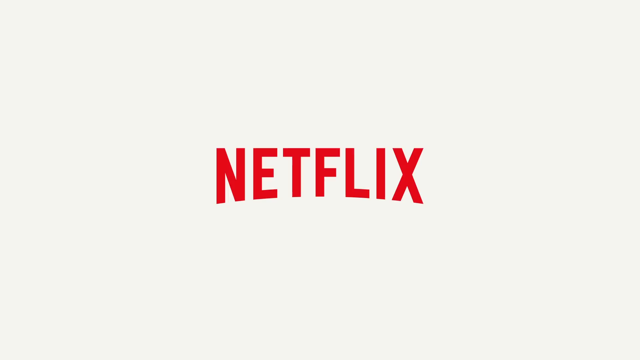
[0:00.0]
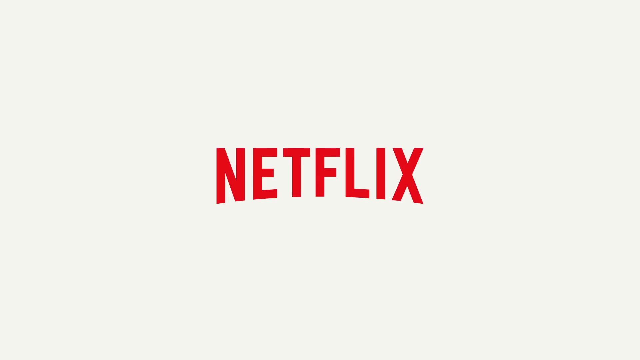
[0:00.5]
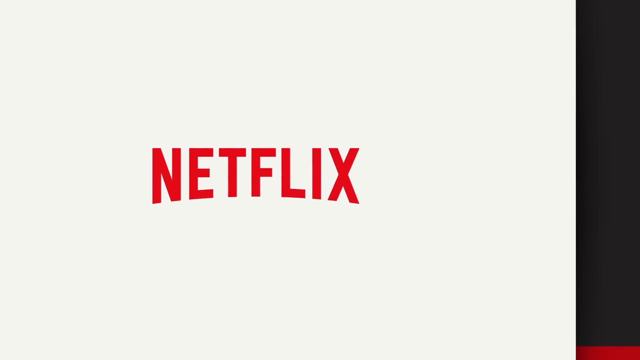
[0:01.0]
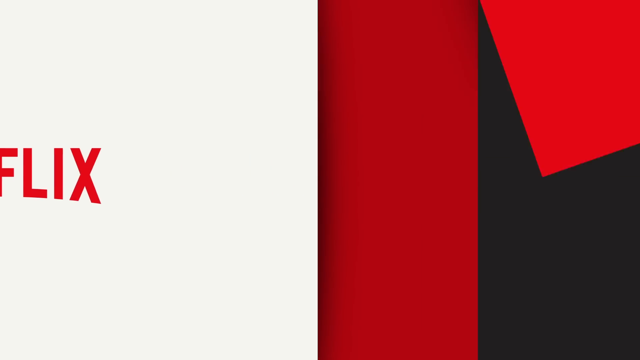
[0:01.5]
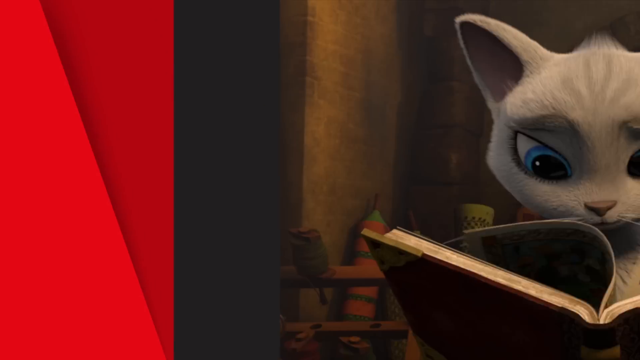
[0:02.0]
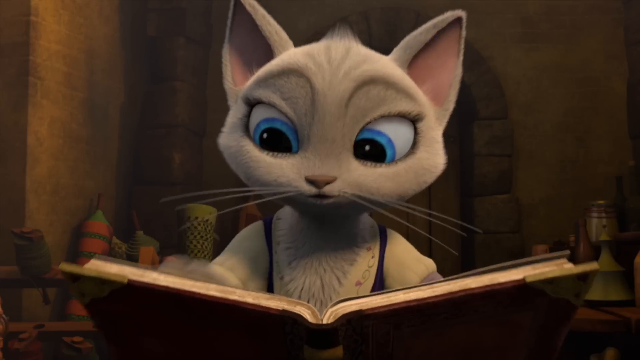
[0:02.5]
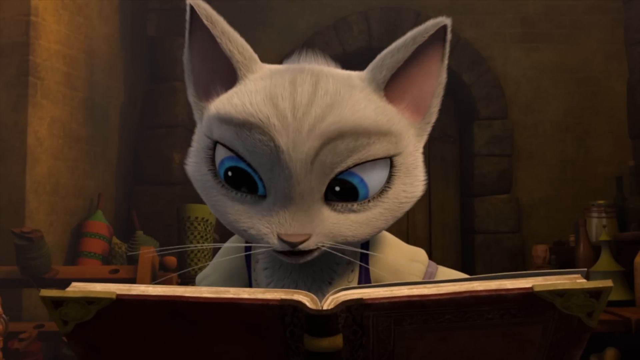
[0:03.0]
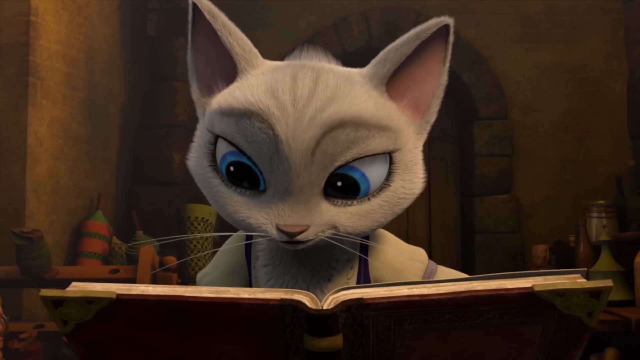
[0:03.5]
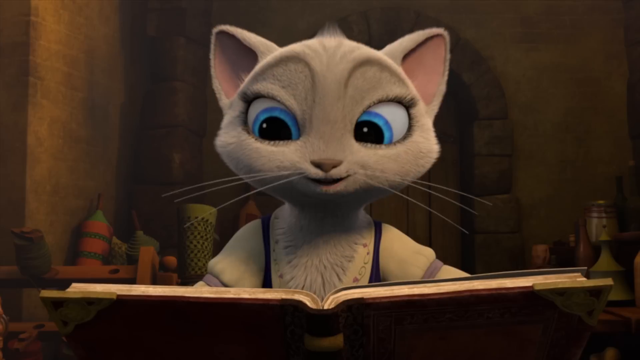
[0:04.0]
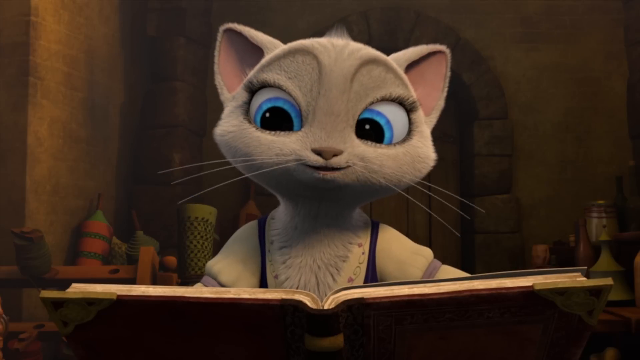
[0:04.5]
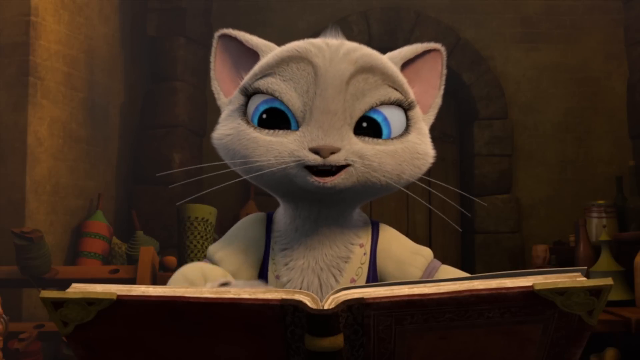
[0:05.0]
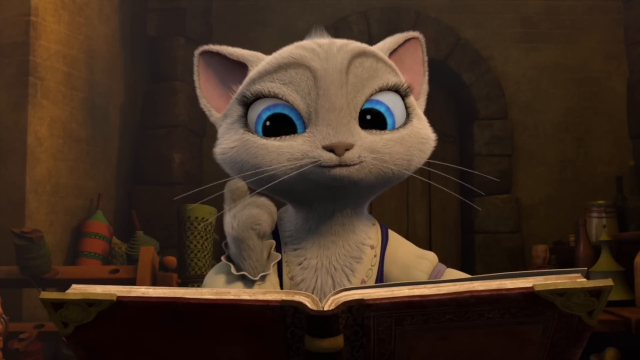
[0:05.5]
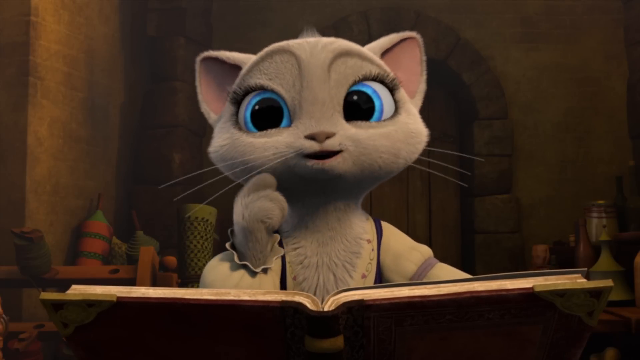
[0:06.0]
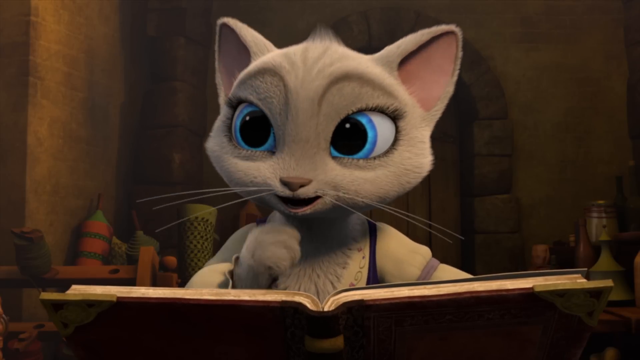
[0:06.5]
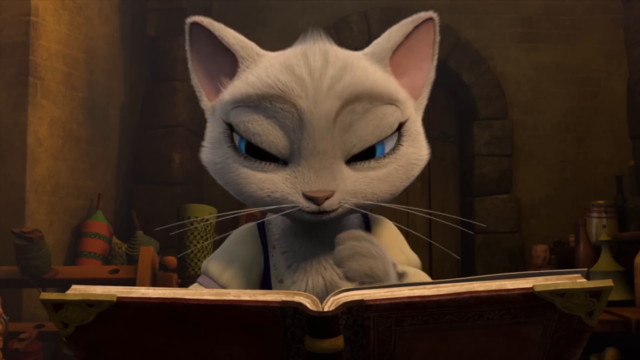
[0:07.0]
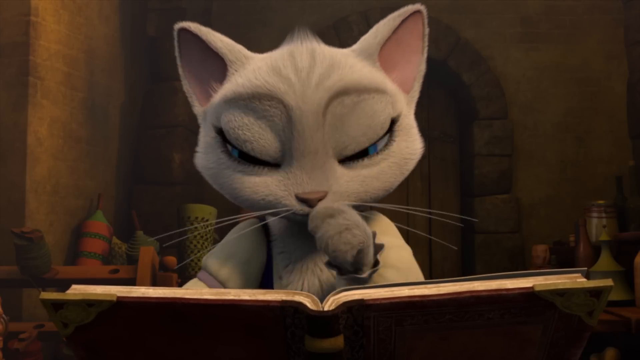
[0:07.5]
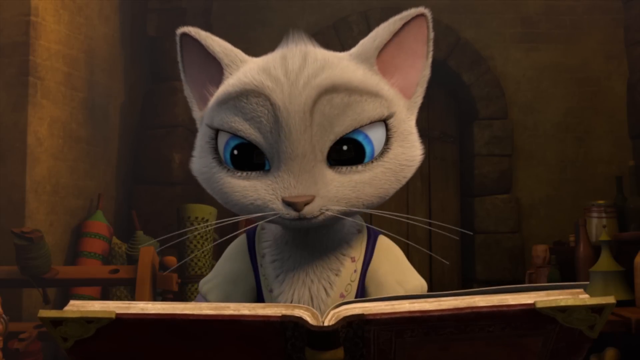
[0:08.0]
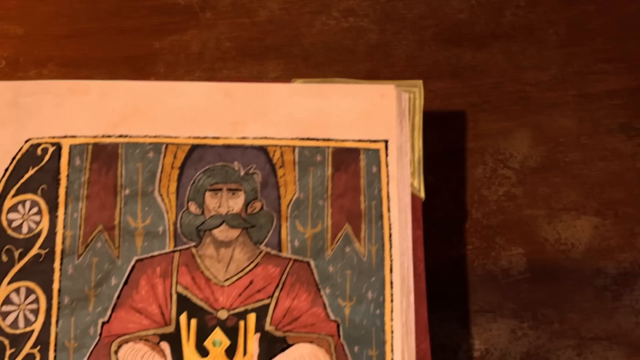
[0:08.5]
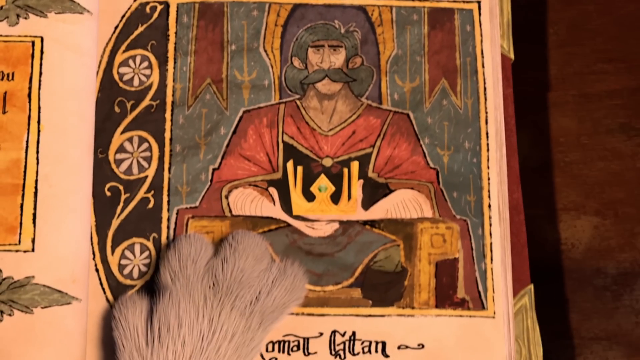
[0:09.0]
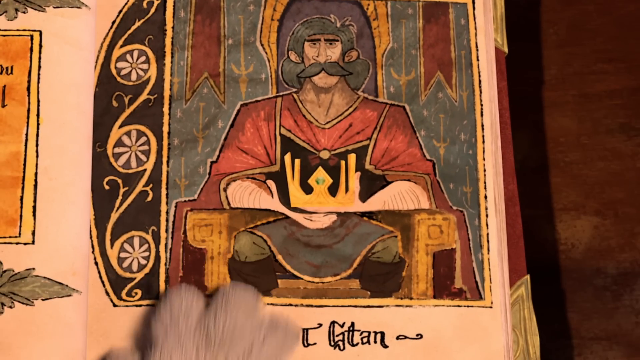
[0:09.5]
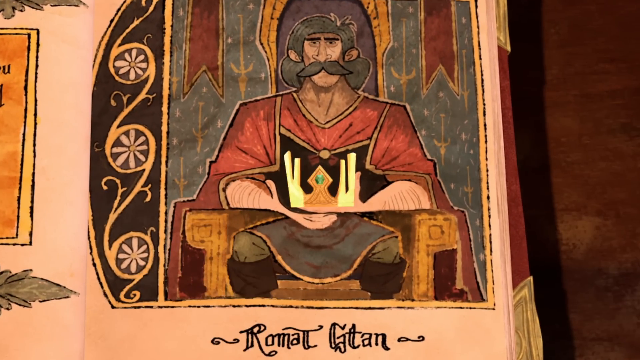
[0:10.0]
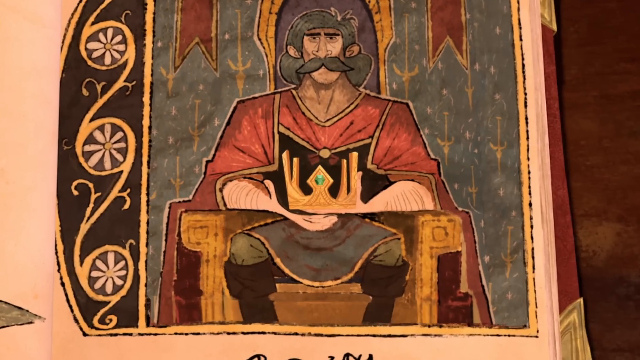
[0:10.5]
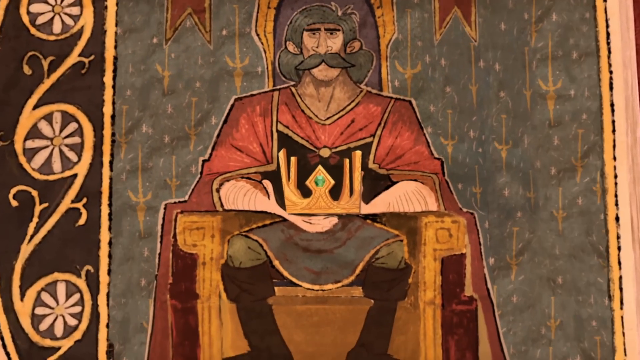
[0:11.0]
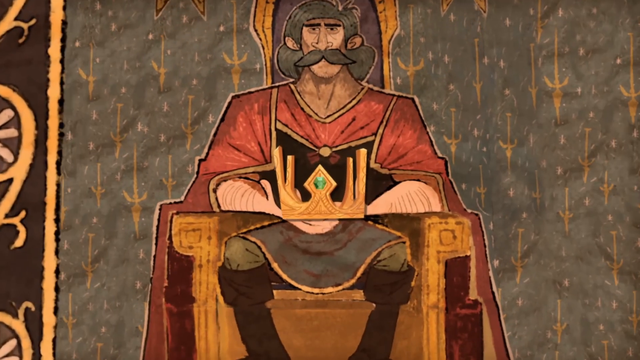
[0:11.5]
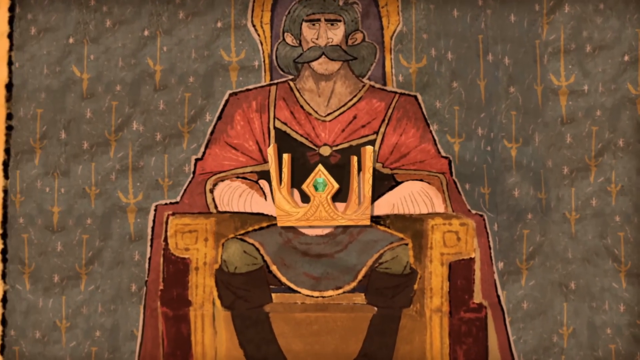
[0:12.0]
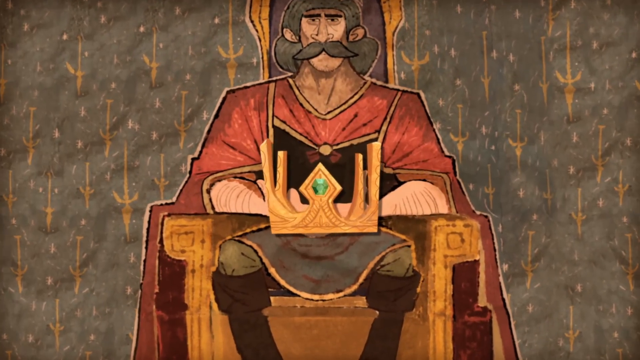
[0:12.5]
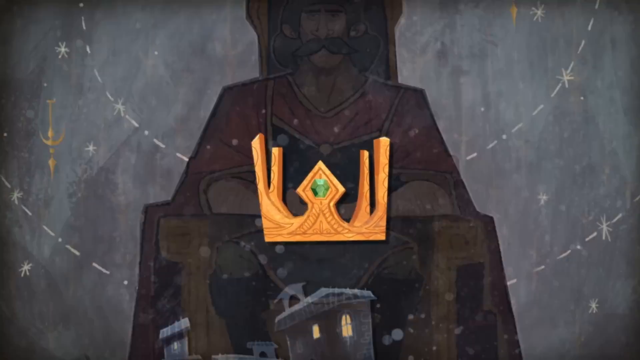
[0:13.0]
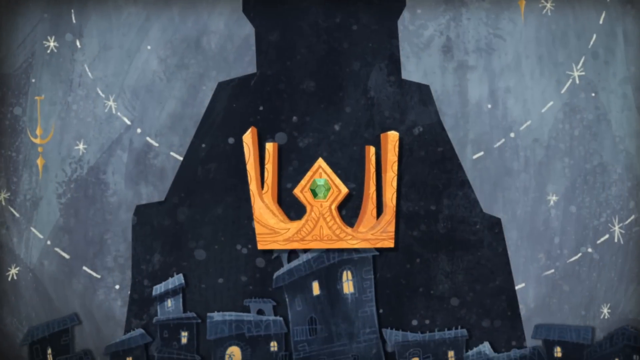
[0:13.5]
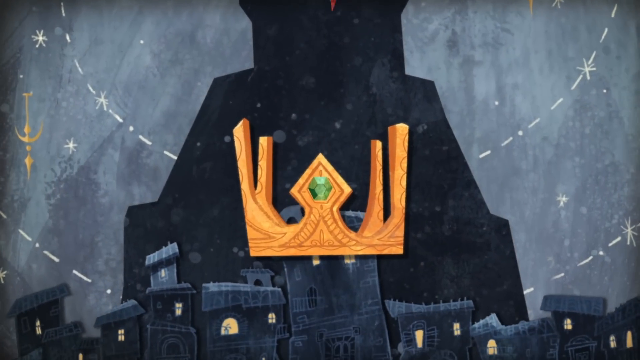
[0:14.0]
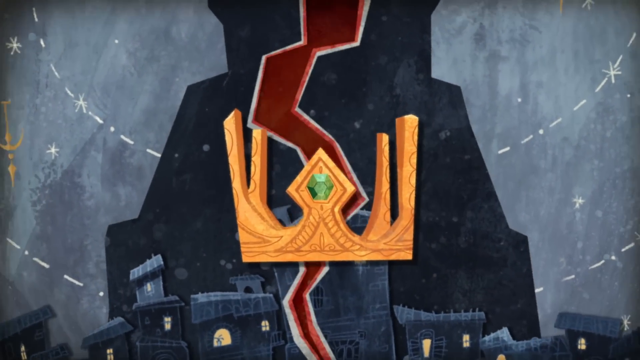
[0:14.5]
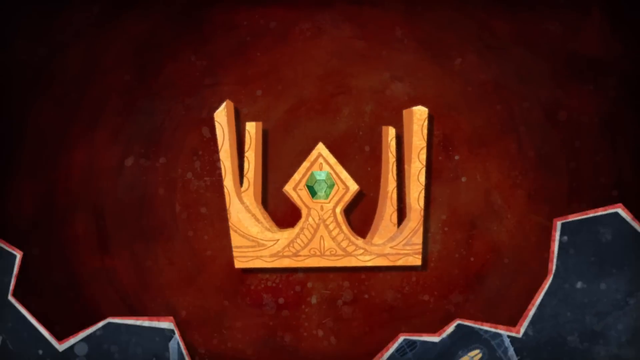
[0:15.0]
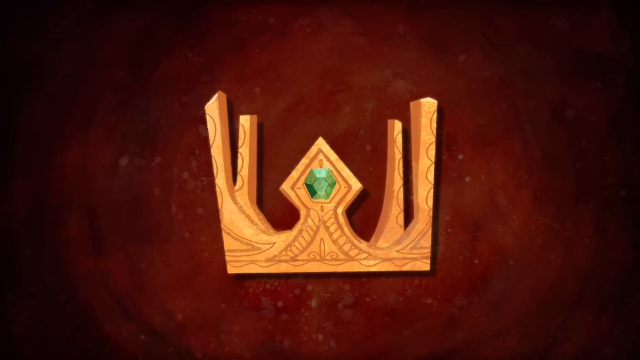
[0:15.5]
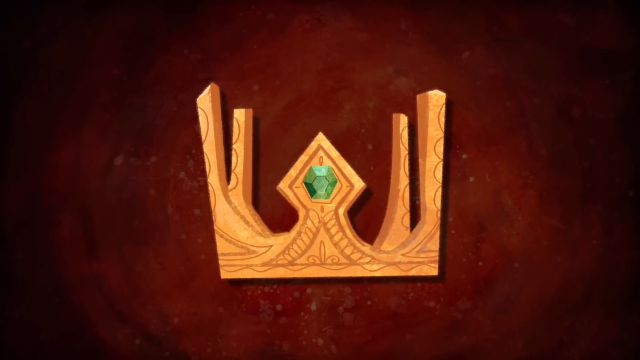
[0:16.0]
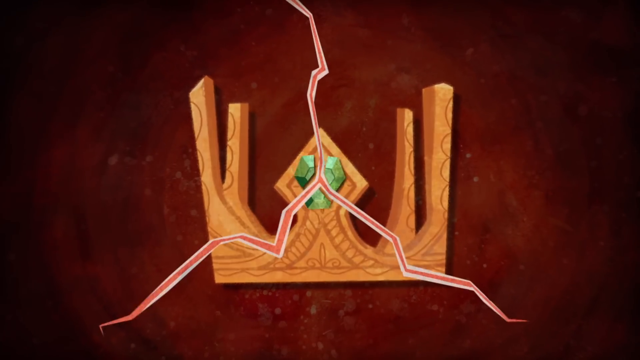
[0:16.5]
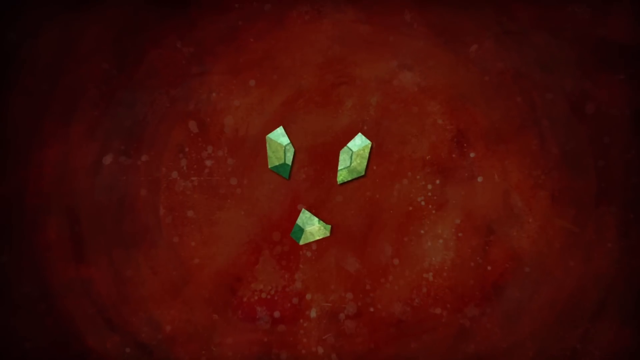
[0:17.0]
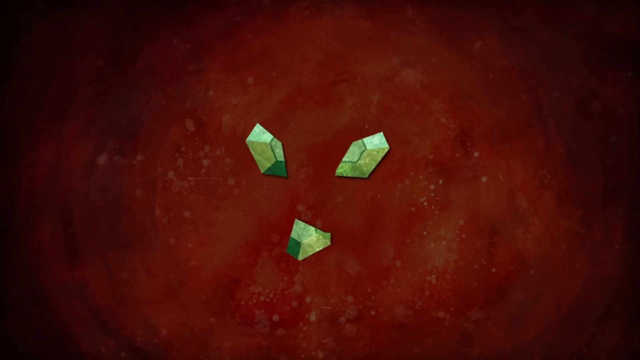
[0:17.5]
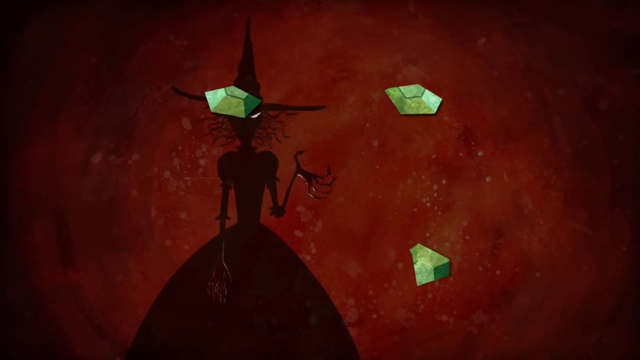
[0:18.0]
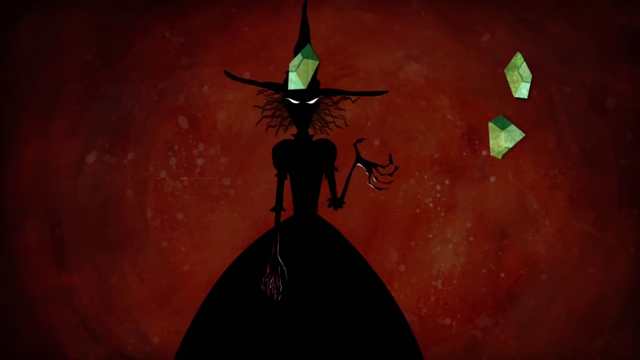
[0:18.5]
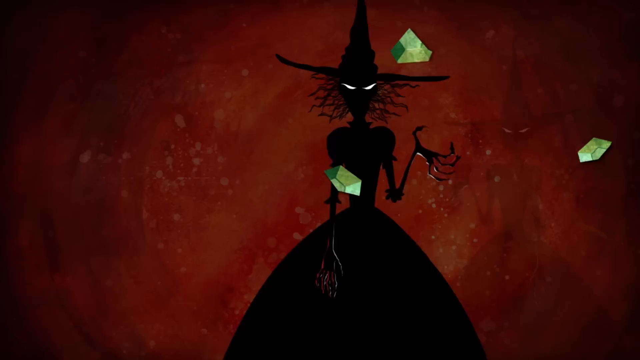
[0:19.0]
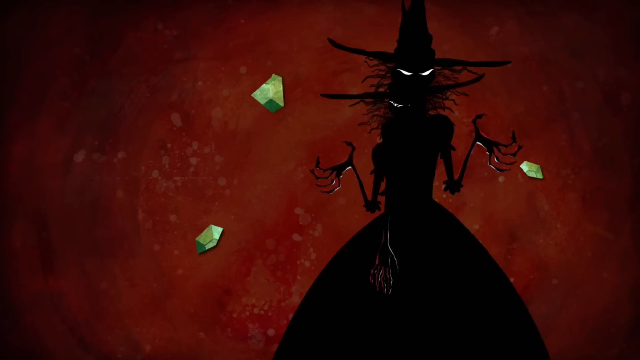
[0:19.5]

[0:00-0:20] A Netflix logo appears, followed by a cartoon cat with blue eyes reading a book. She keeps reading and even coughs. She is in a room alone. A king is shown, then a crown, which splits. Witches appear, and the crown splits the town with lightning. There is a dark cloud over the town.